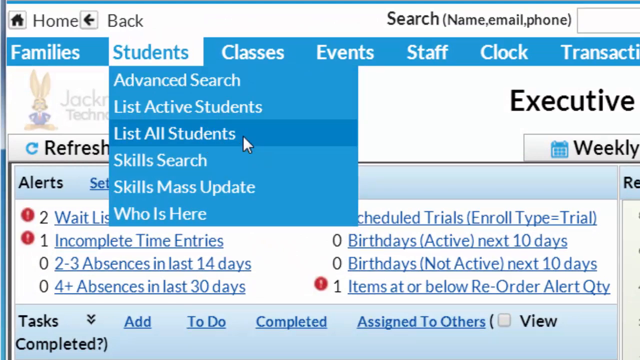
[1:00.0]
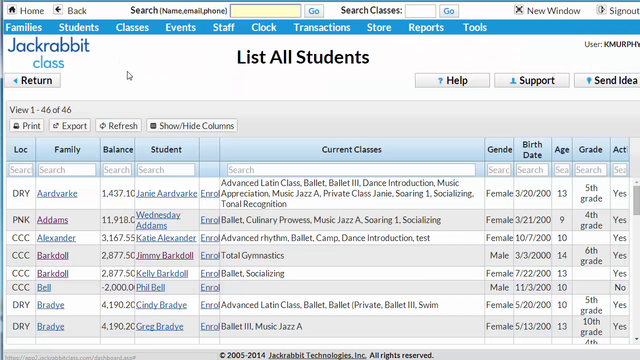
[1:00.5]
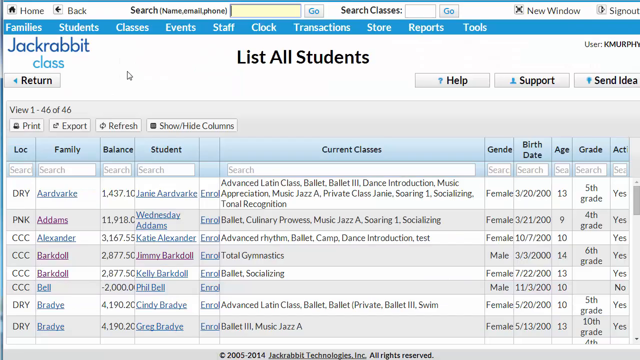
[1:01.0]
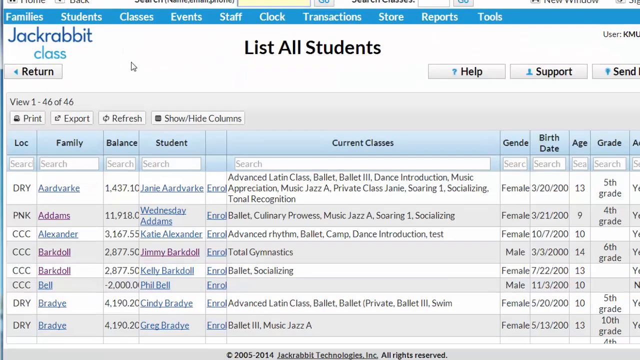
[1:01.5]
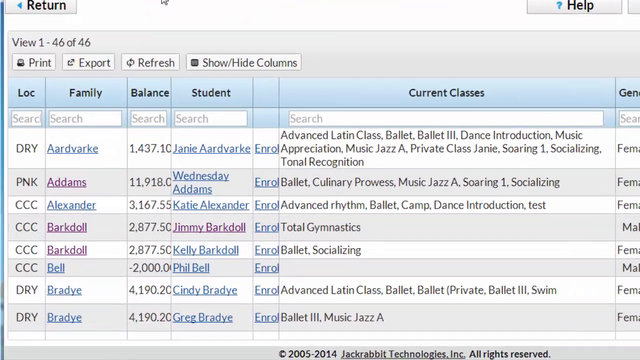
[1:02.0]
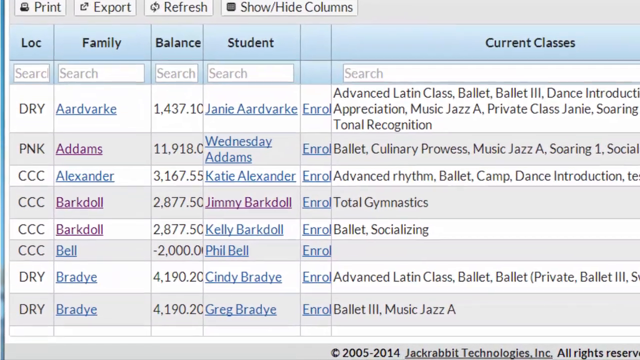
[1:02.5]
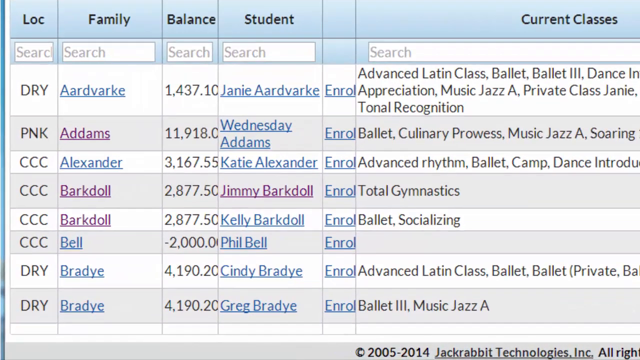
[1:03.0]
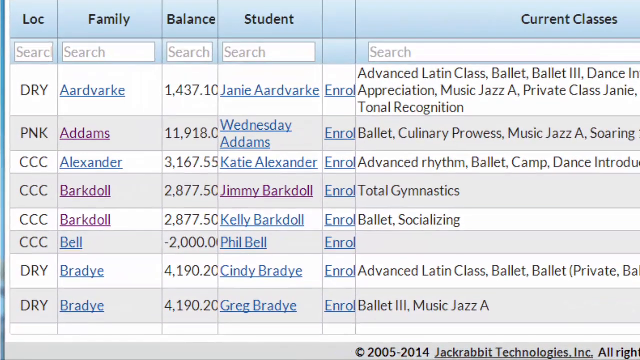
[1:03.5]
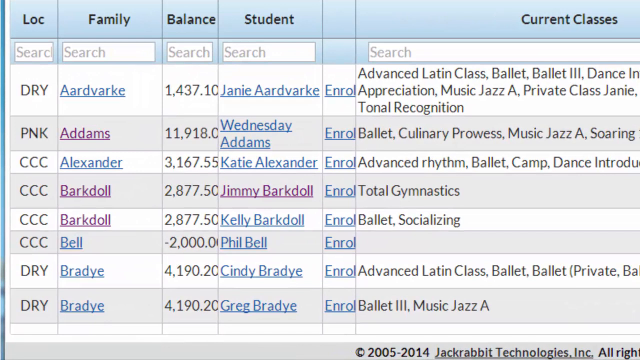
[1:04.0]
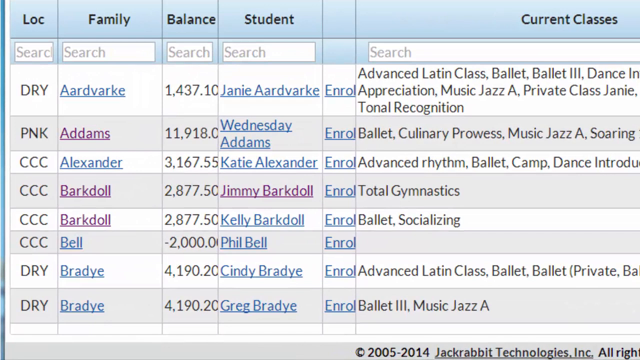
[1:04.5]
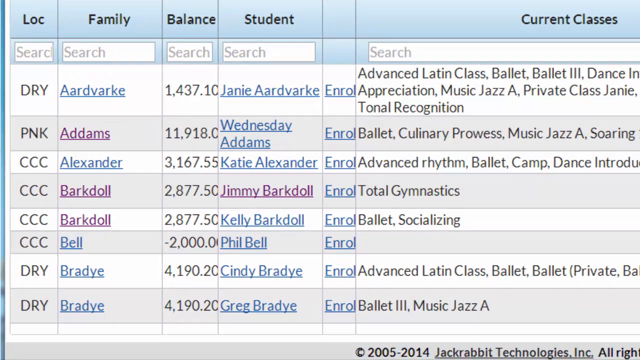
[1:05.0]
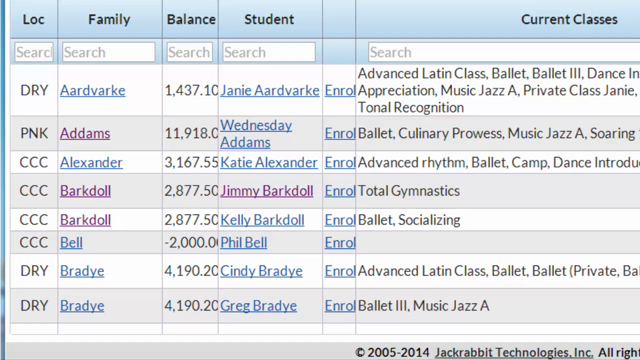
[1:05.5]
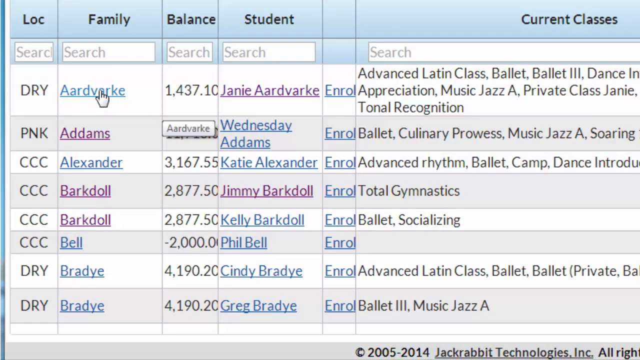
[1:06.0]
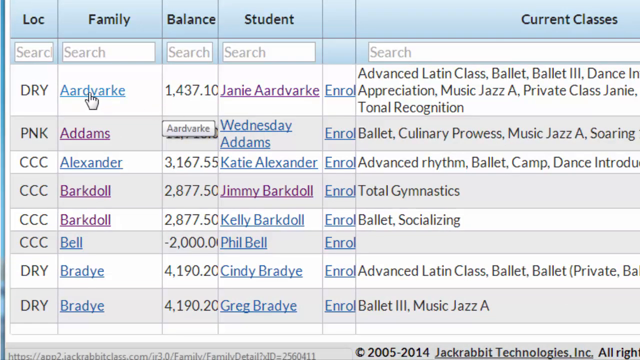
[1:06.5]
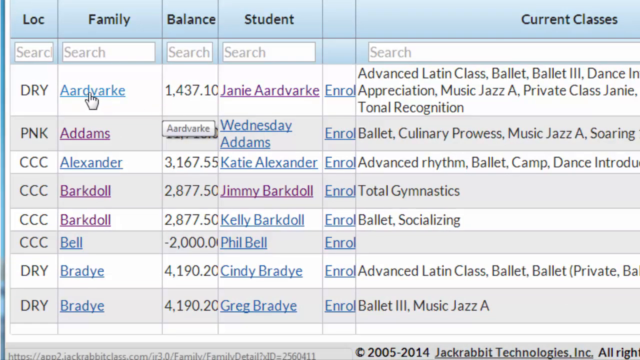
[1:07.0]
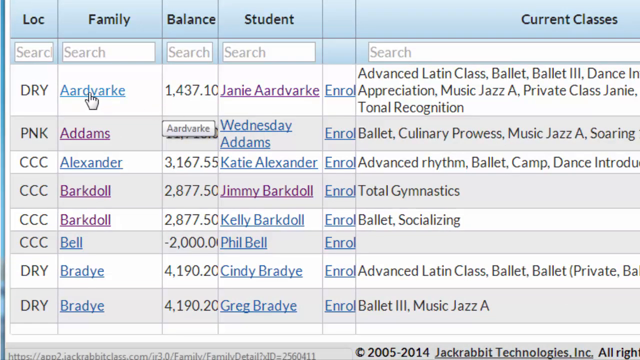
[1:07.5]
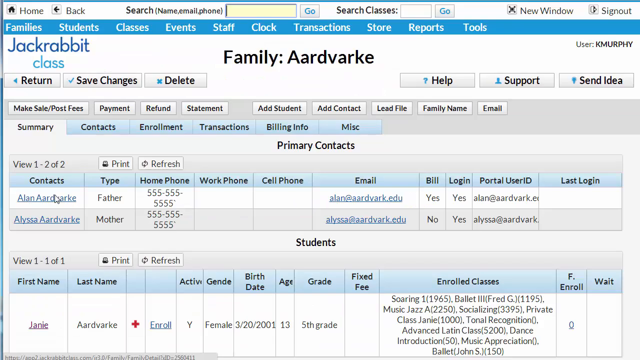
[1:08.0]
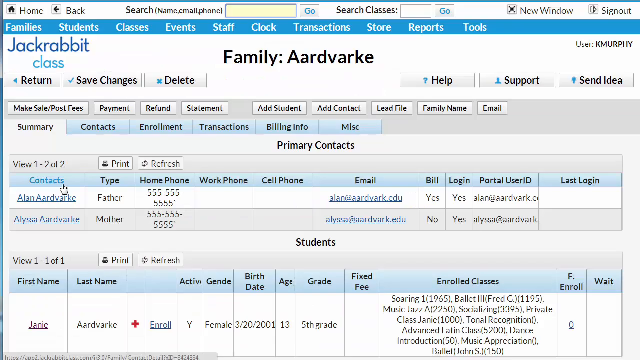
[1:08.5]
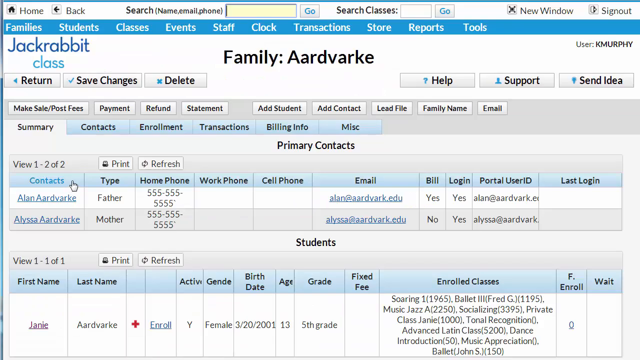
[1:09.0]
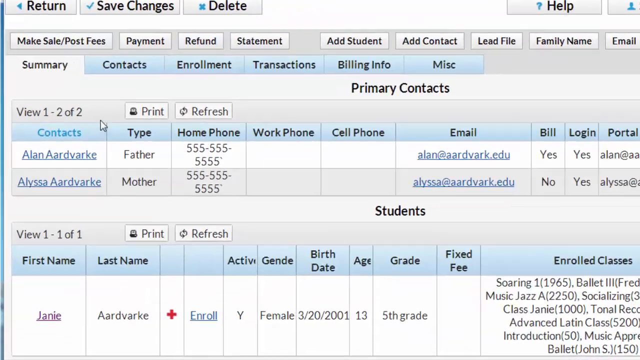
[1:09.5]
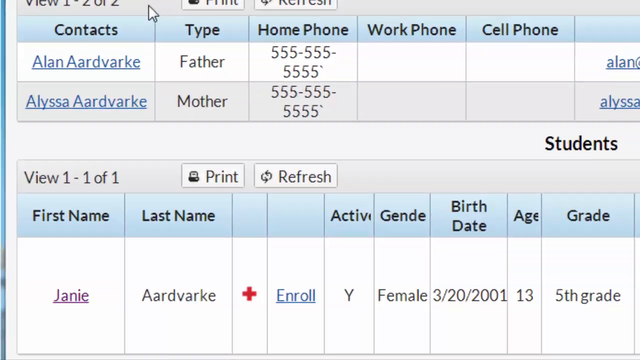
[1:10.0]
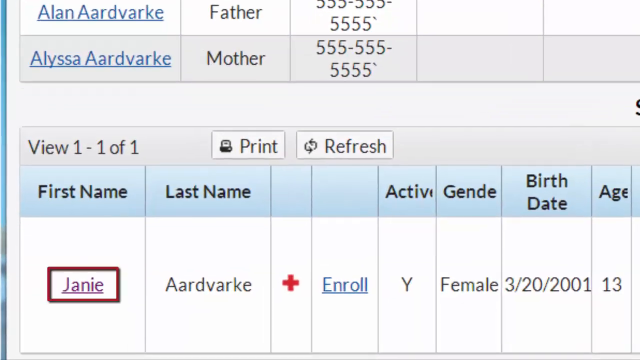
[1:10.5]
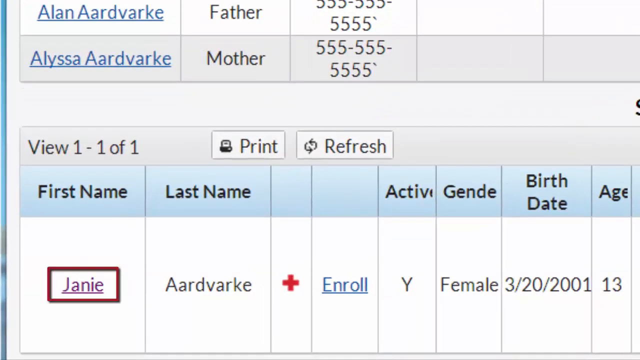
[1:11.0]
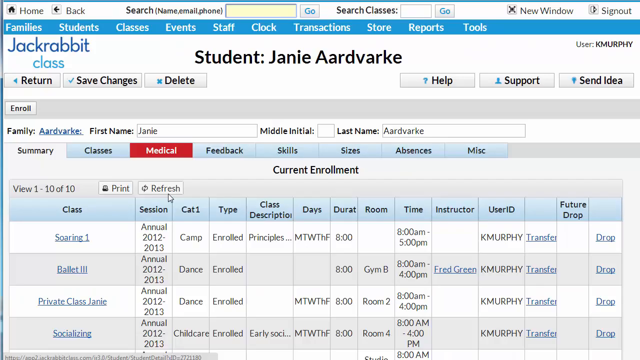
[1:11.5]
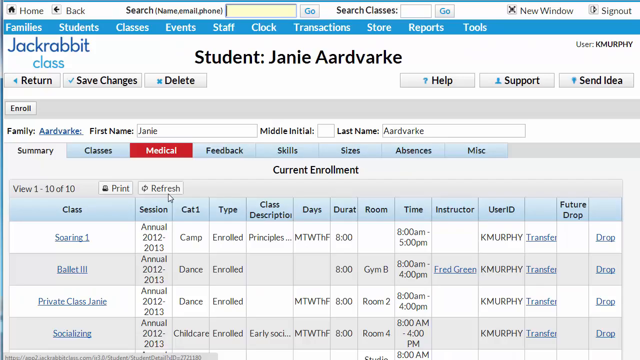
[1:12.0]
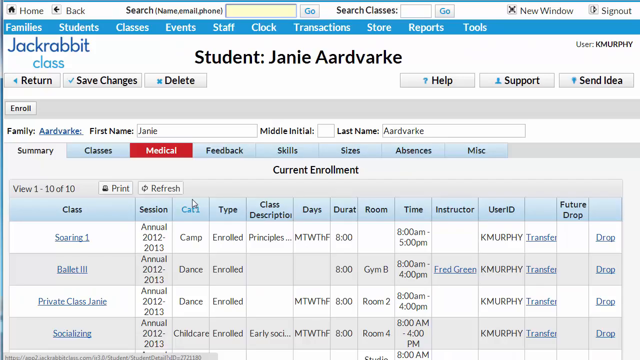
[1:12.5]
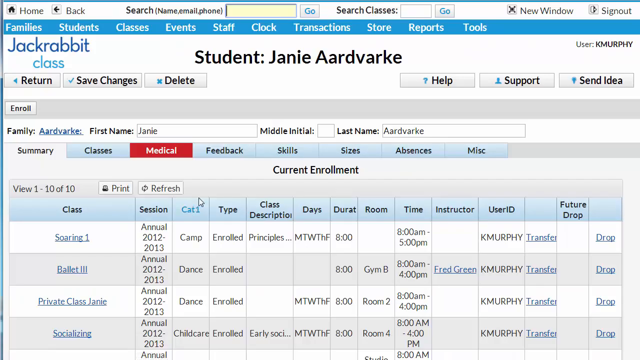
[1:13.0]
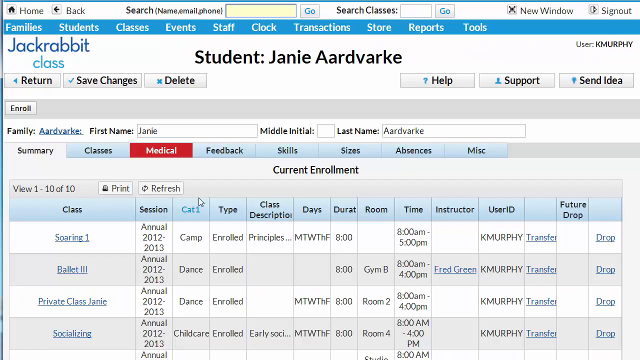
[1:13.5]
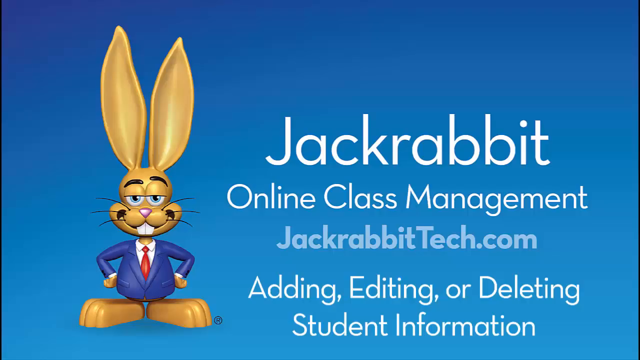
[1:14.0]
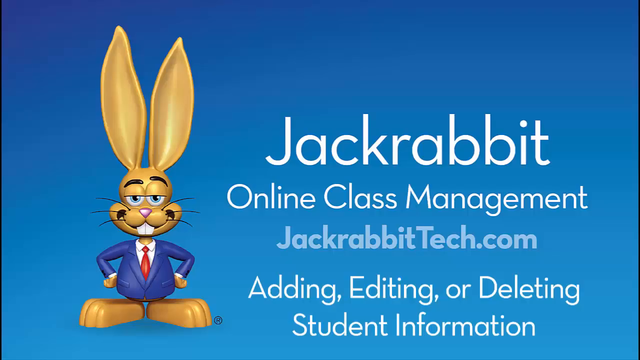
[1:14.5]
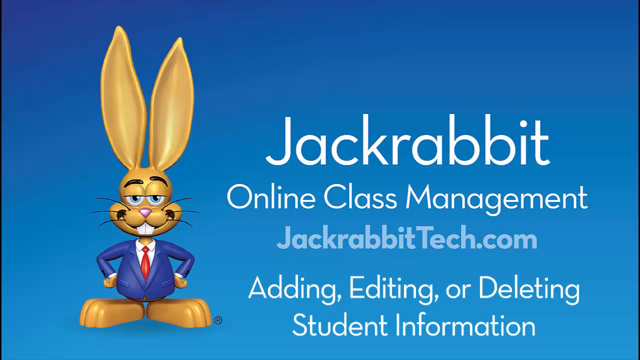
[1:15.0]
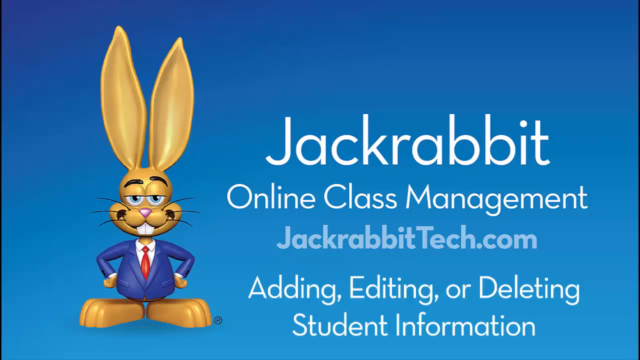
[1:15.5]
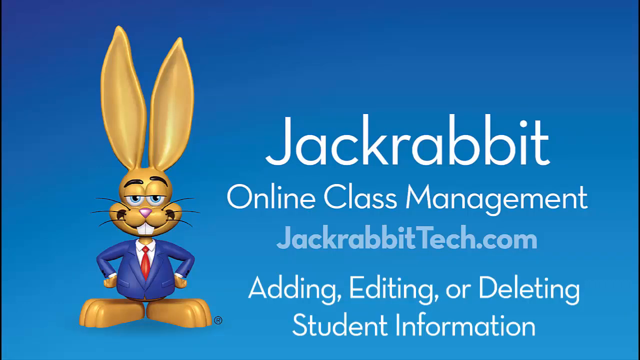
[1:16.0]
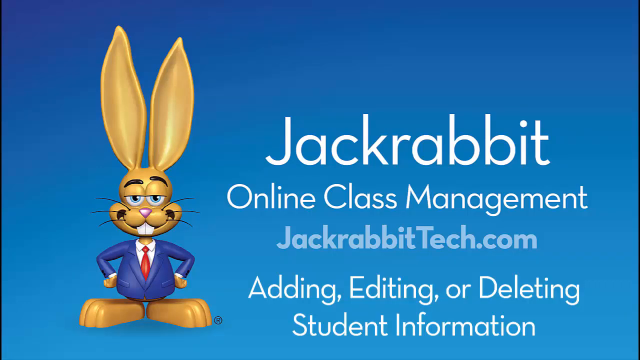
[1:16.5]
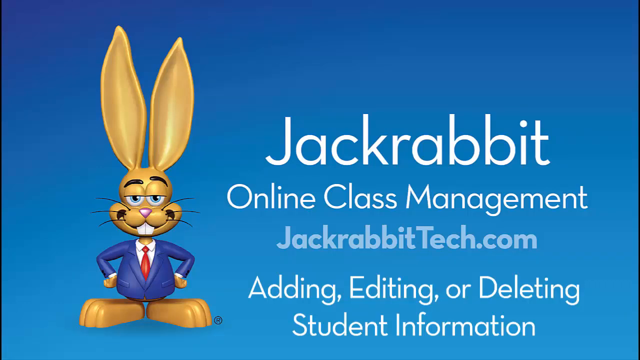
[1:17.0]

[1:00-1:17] The view is zoomed in on the List All Students page, showing a list of family names and students along with the classes they are currently enrolled in. The icon hovers over the first family name, Aardvarke, which is clicked to open the main page for that family. The view zooms in to the student section, where the name Janie appears. It is clicked, opening her current enrollment page, which shows some of her classes: Soaring 1, Ballet III, Private Class Janie, and Socializing. This summary page has various tabs for other aspects of each student, such as "Classes", "Medical" (in dark red to stand out), "Feedback", "Skills", "Sizes", "Absences" and "Misc." The video then returns to the main presentation page seen at the beginning, showing the Jackrabbit Online Class Management title and the rabbit in the suit jacket, shirt and tie.